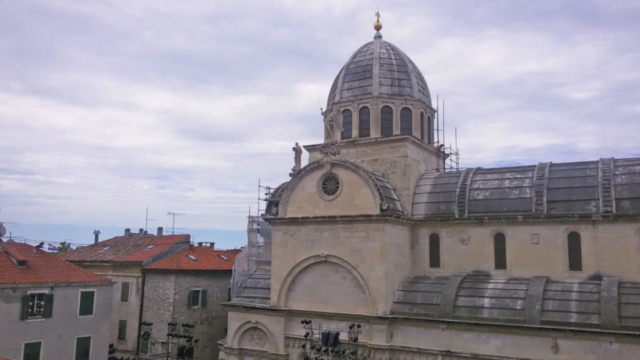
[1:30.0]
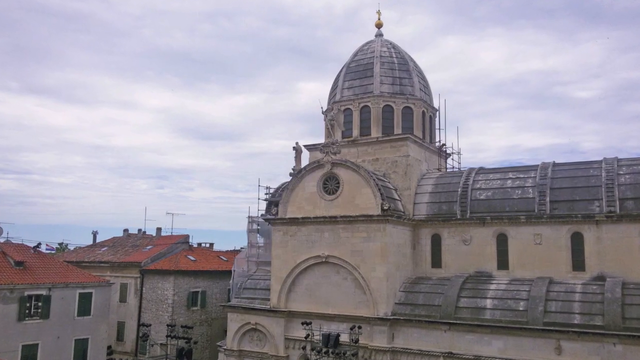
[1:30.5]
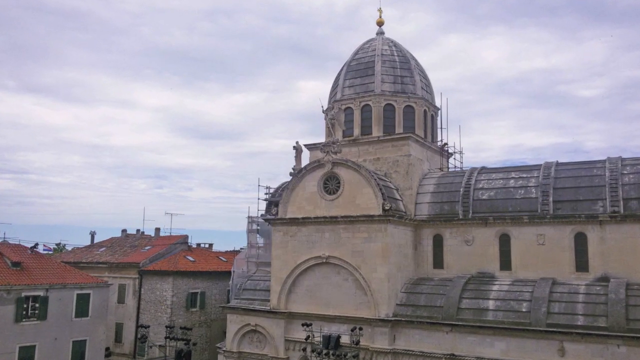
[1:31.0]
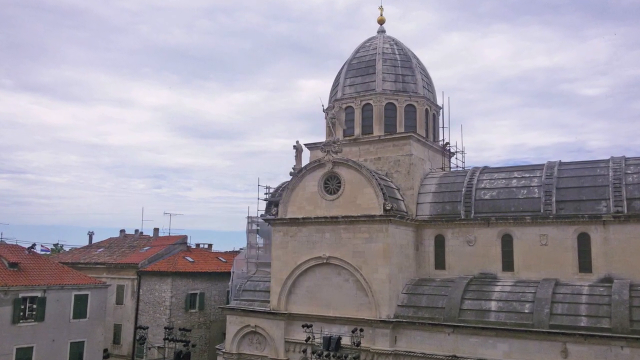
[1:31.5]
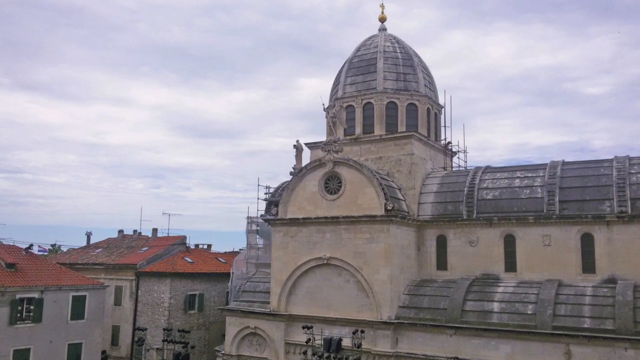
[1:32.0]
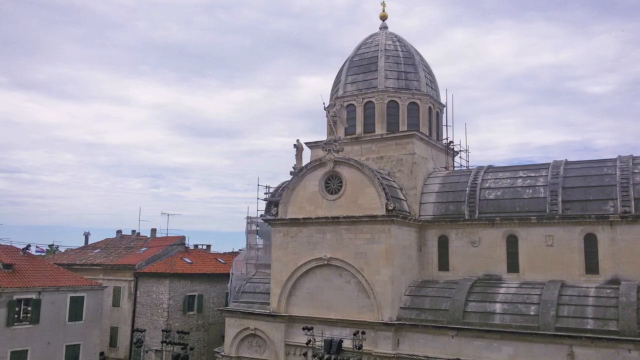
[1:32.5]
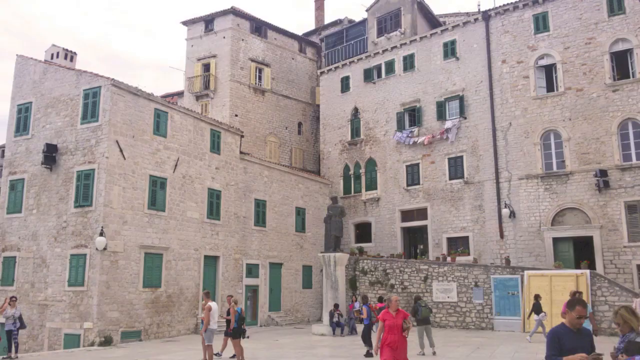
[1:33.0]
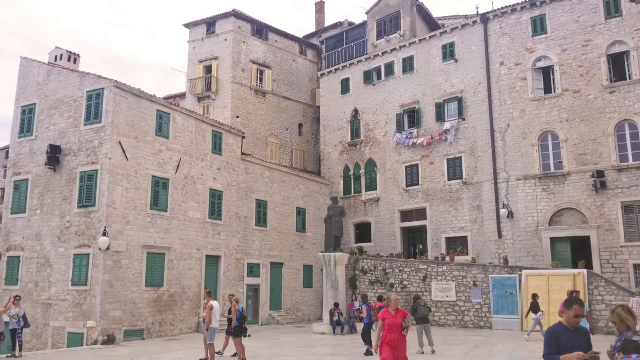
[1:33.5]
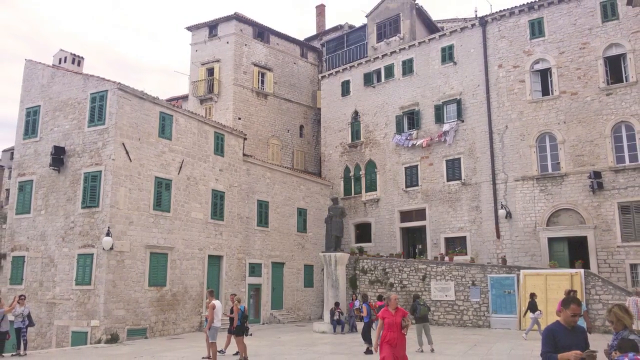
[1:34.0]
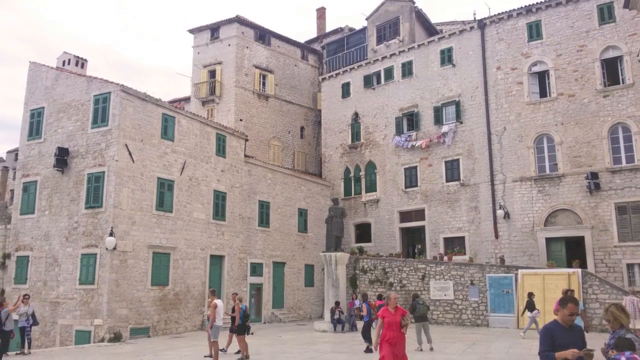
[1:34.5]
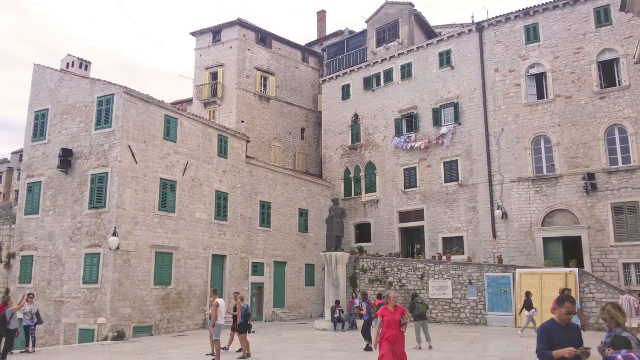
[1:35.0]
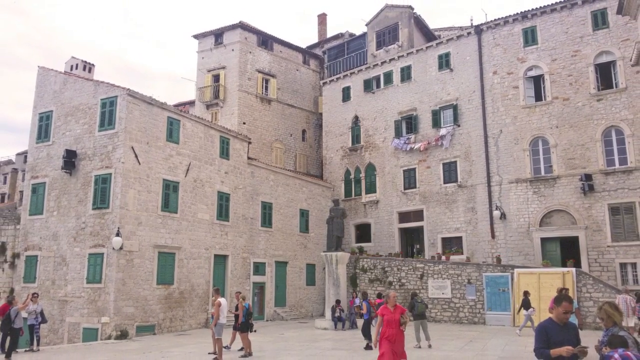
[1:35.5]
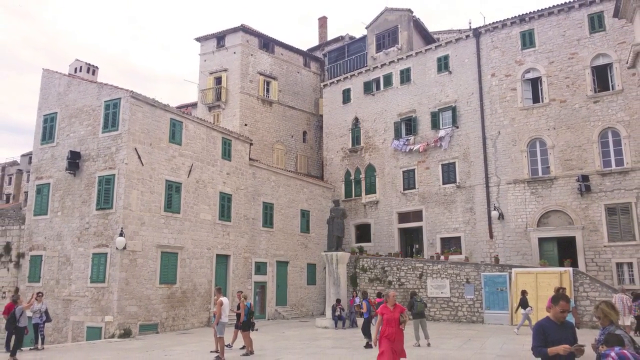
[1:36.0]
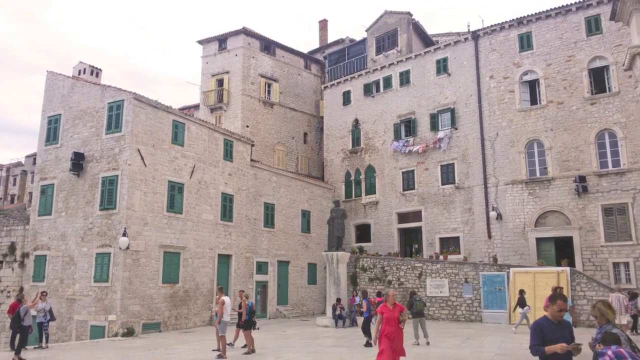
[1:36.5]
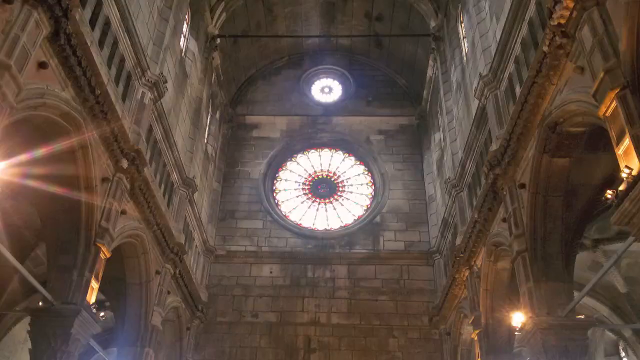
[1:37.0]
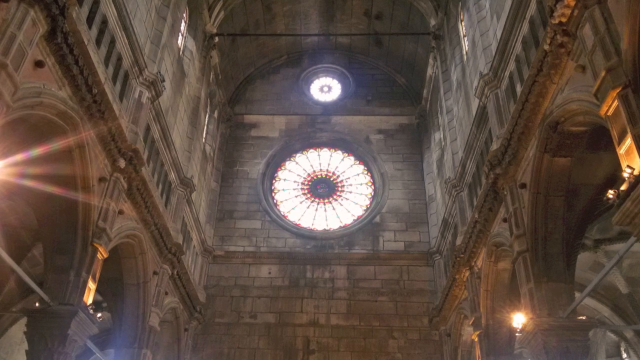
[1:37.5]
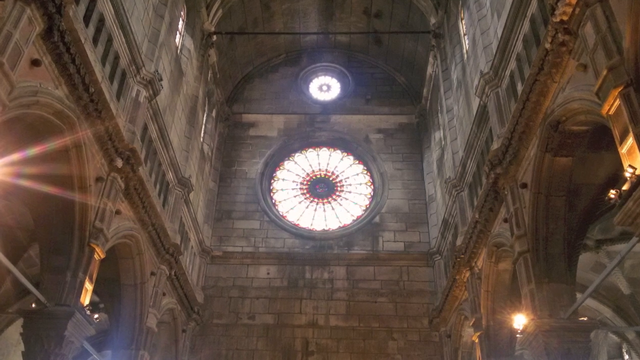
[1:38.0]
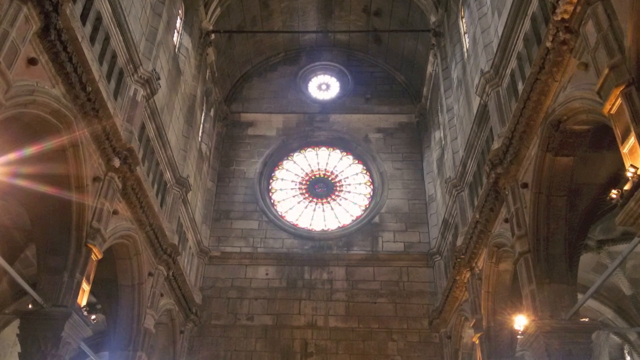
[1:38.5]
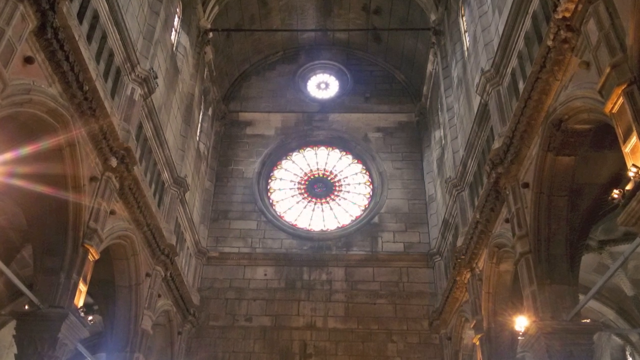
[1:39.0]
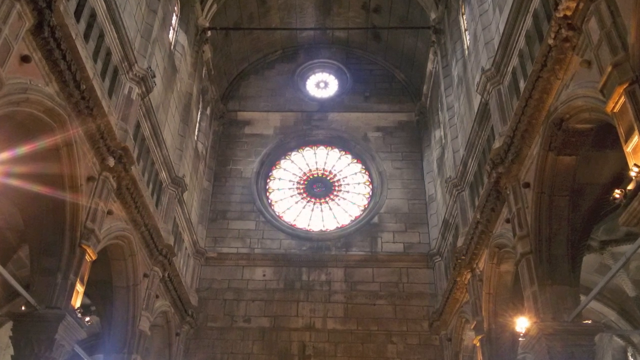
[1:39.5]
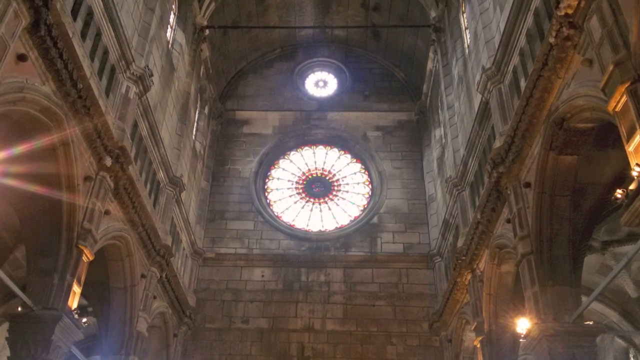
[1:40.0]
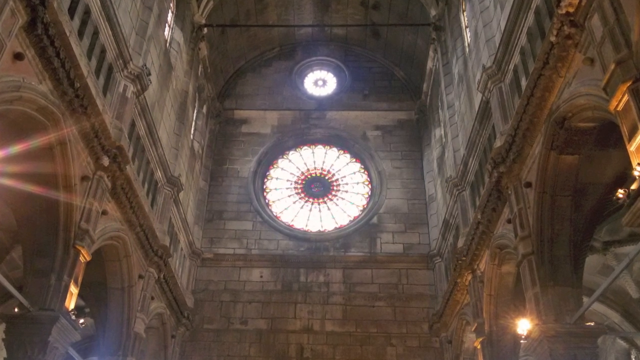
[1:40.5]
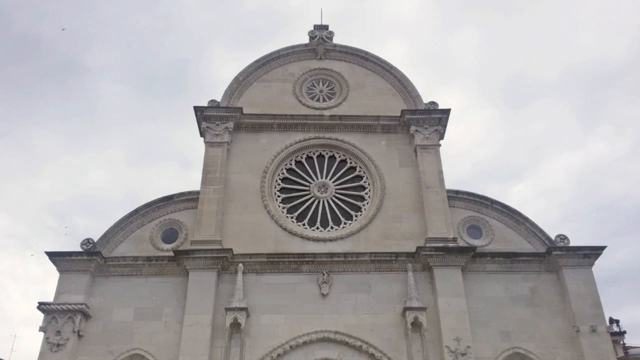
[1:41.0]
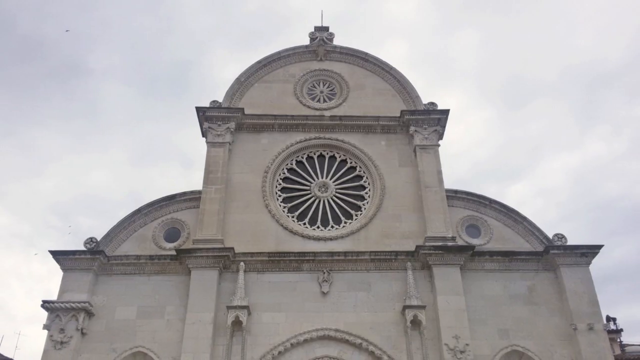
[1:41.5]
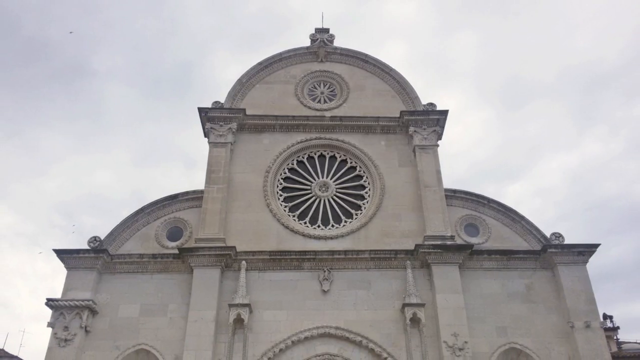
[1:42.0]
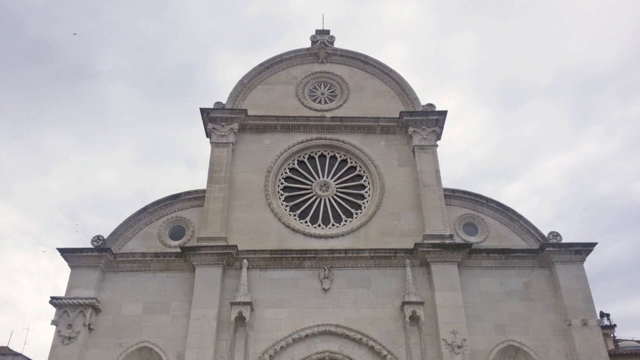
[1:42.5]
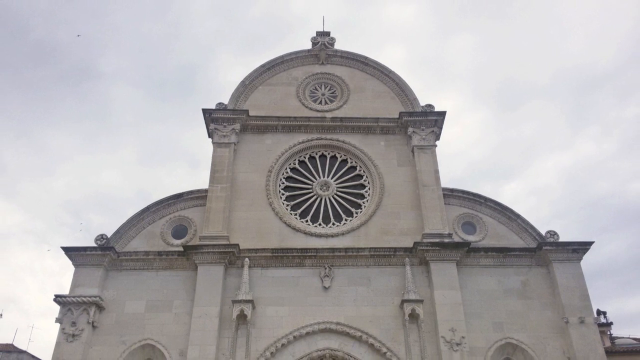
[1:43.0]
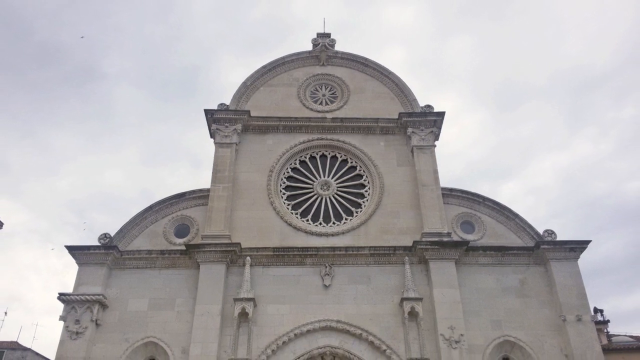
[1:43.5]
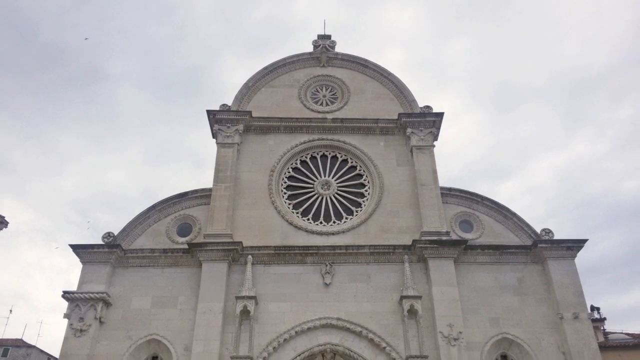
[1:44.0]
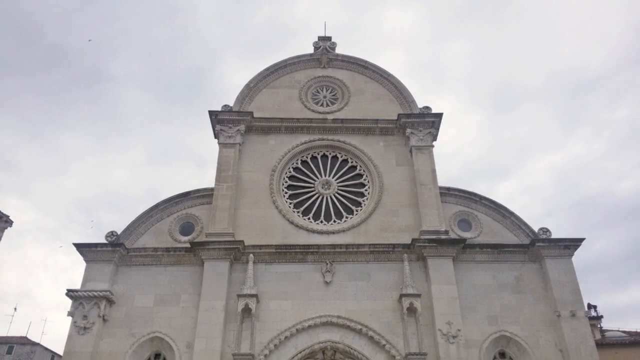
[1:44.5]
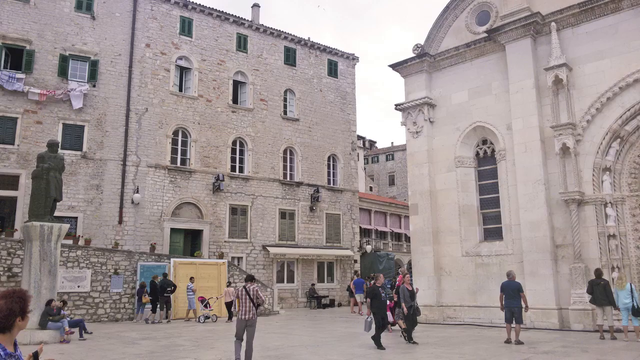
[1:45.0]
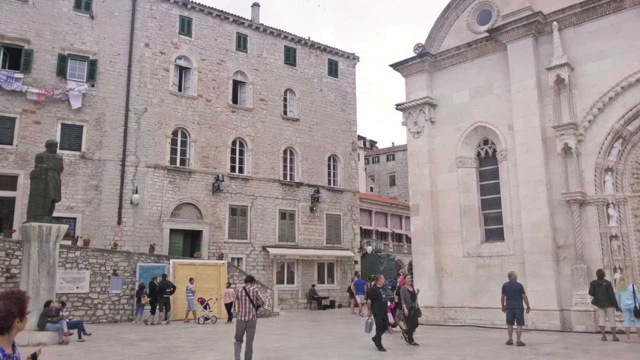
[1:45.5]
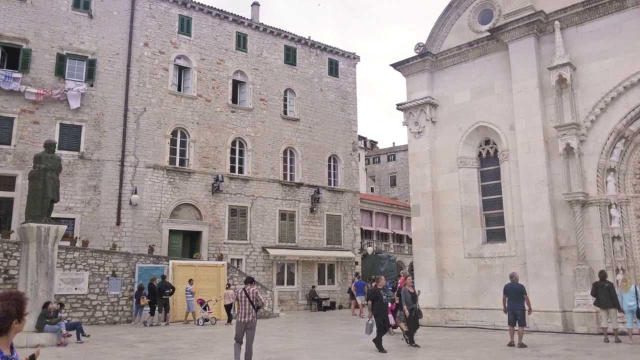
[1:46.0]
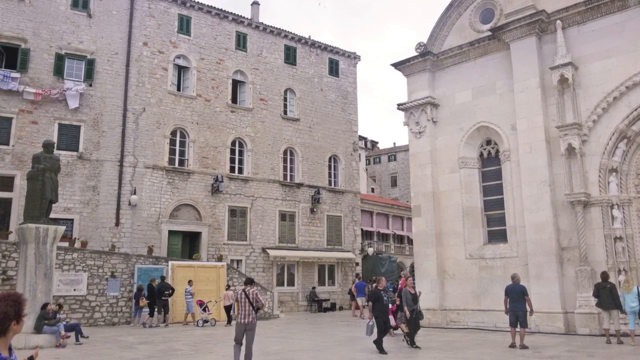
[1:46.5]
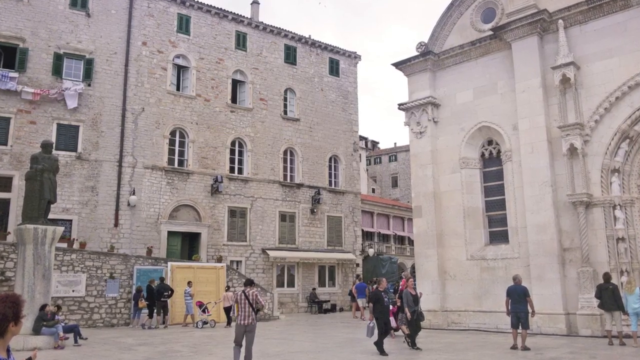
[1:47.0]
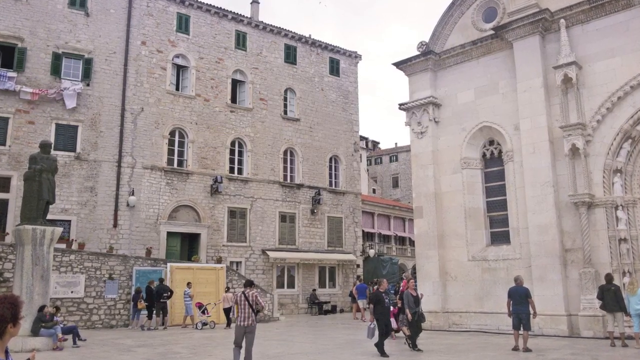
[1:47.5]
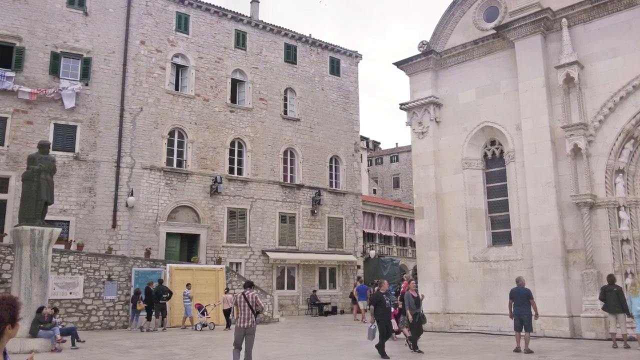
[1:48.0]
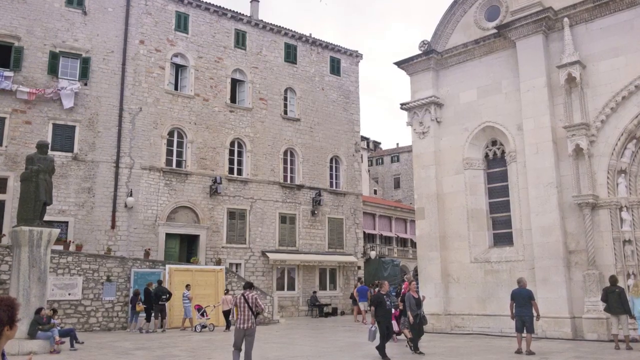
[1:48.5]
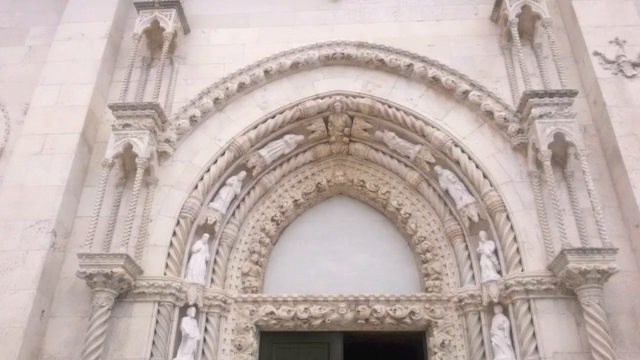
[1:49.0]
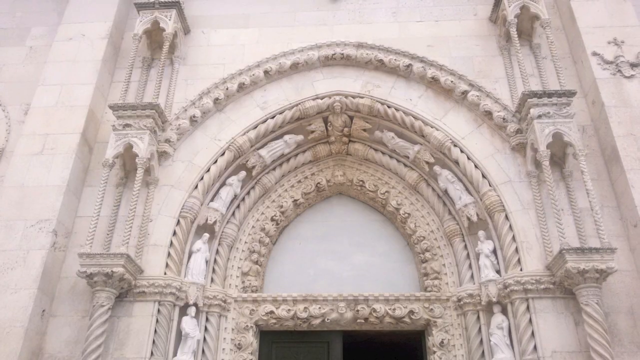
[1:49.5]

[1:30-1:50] The video starts with a large building that looks to be an apartment building, a tan brick structure with a lot of green windows, around four or five stories high. The camera zooms out a little, and as it does, some people can be seen walking in front of the building. Next the view is inside a building that looks like maybe a cathedral of some sort, with arches on the right and left, looking out a circular window with sunlight coming through it; the whole interior is made of brick. The video then shows what may be the outside of the building: the round window seen from outside, on a dome-like shape made of an off-white brick or cement-colored material, with a very overcast sky in the background. Another brick building, which looks to be maybe an apartment complex, appears next; it looks to be about four or five stories high with several windows, and some people are in front, standing or possibly walking by. The camera starts zooming in a little, and finally there is a close-up of what looks to be that same building.